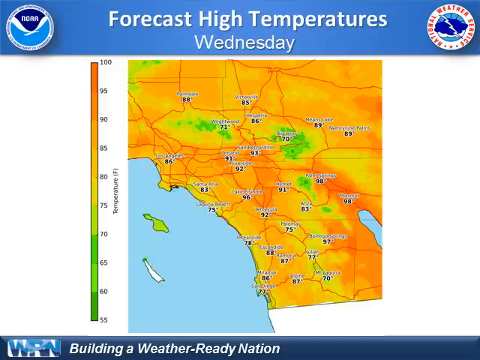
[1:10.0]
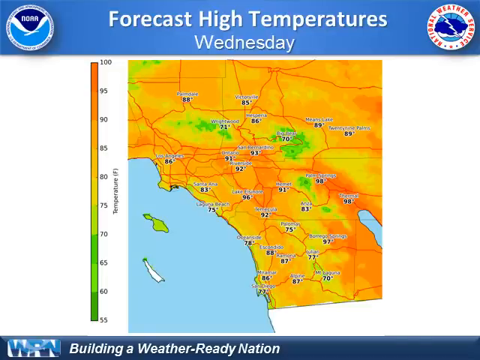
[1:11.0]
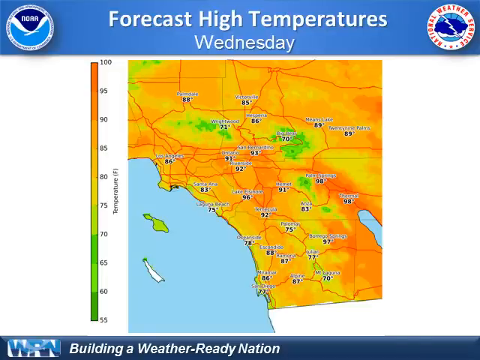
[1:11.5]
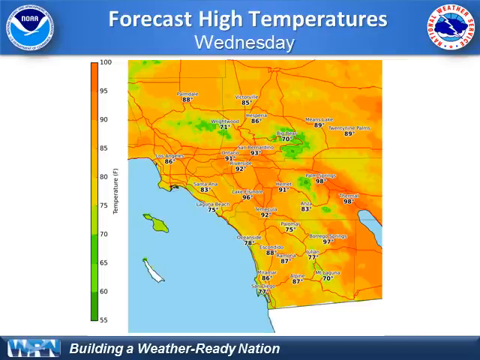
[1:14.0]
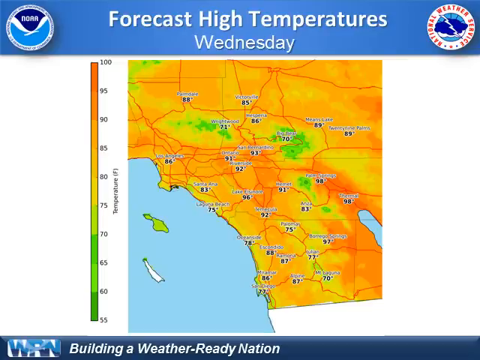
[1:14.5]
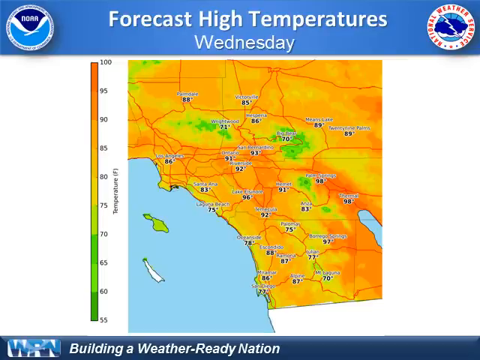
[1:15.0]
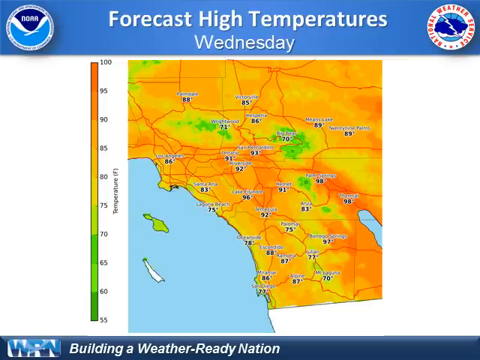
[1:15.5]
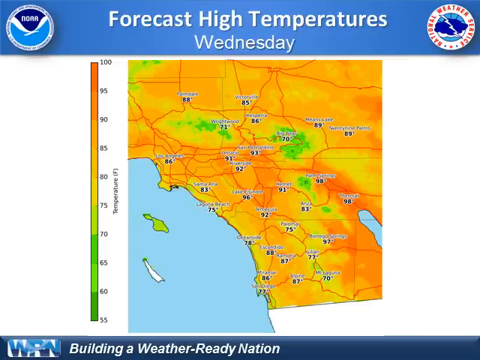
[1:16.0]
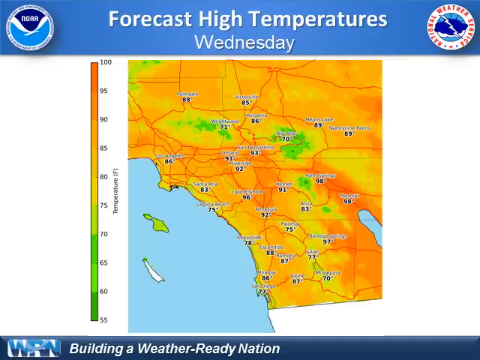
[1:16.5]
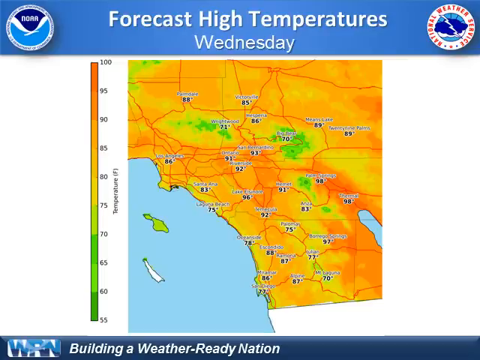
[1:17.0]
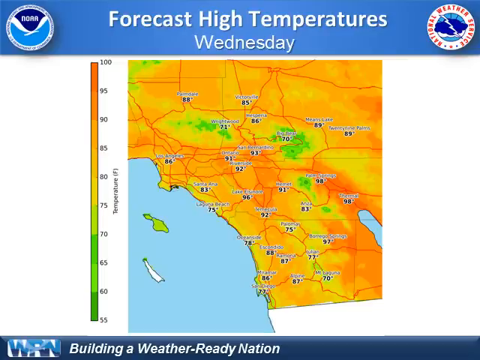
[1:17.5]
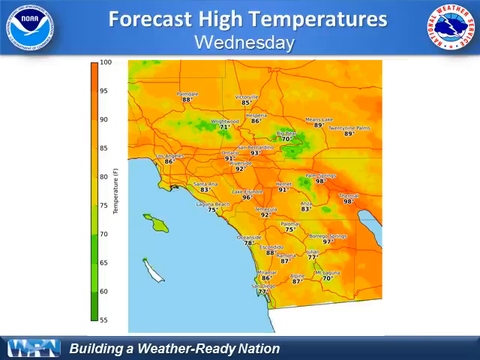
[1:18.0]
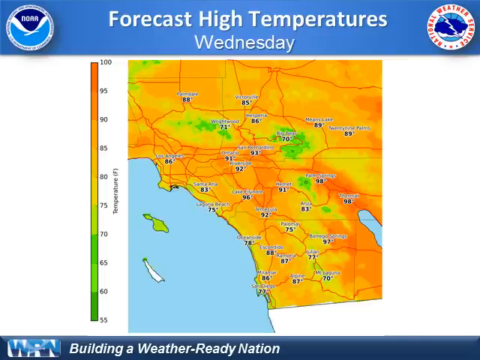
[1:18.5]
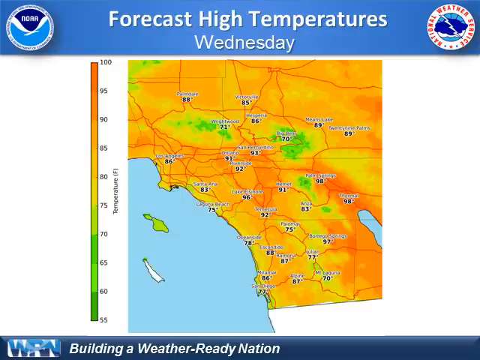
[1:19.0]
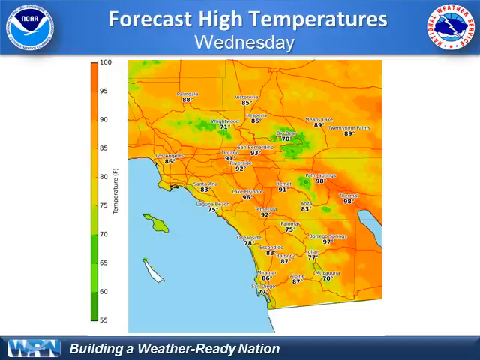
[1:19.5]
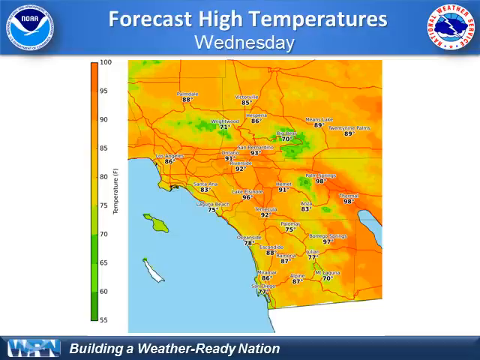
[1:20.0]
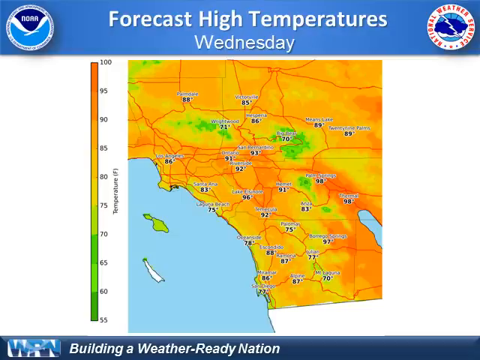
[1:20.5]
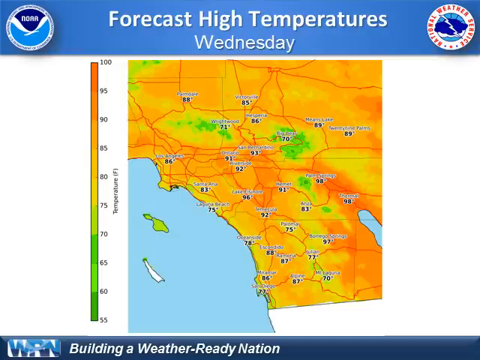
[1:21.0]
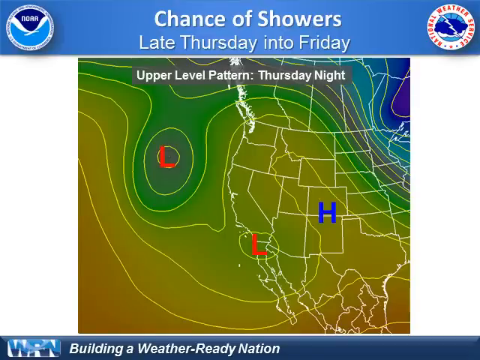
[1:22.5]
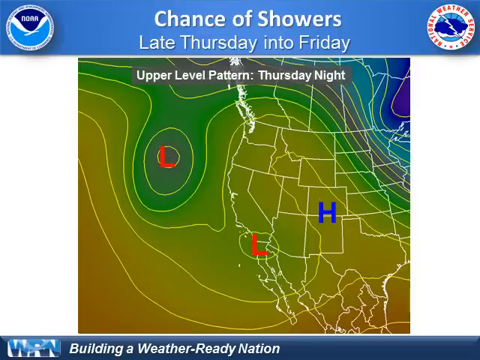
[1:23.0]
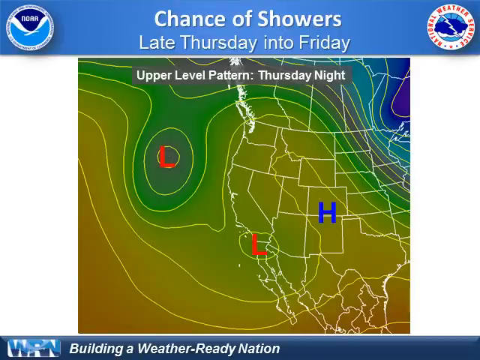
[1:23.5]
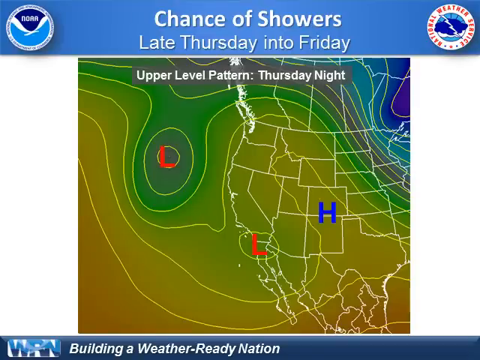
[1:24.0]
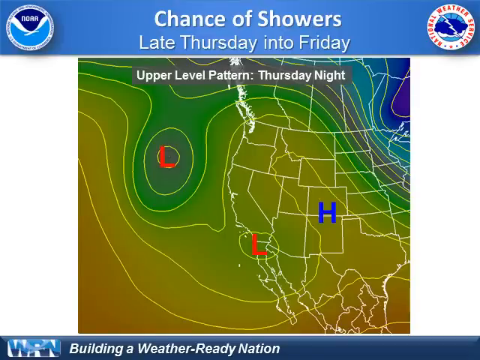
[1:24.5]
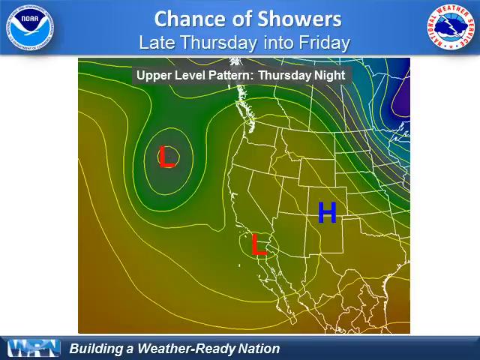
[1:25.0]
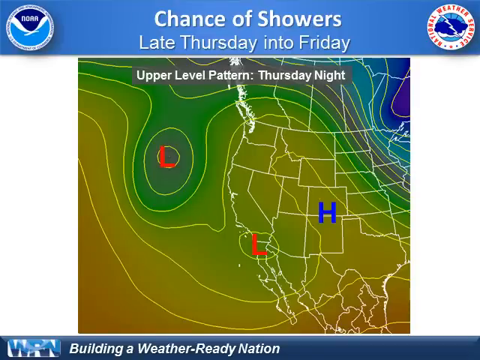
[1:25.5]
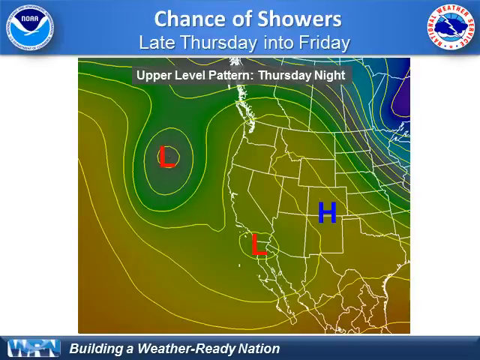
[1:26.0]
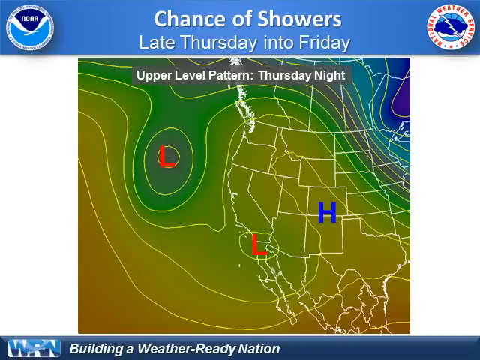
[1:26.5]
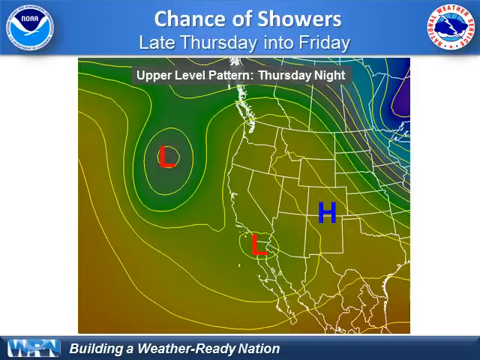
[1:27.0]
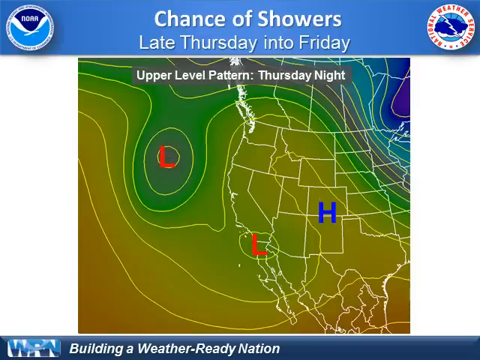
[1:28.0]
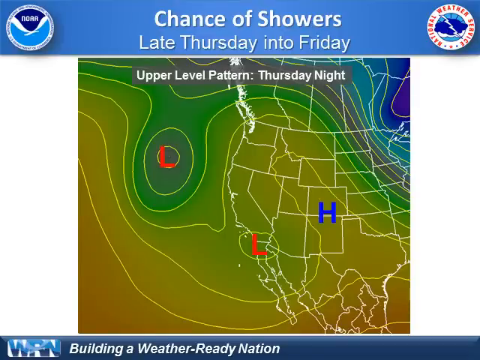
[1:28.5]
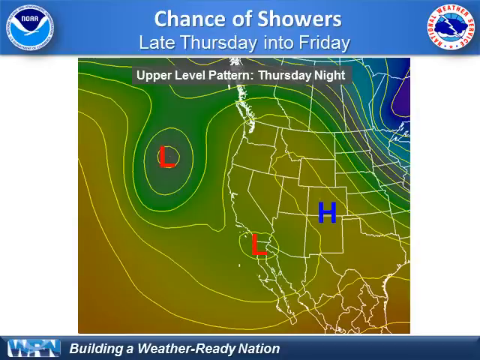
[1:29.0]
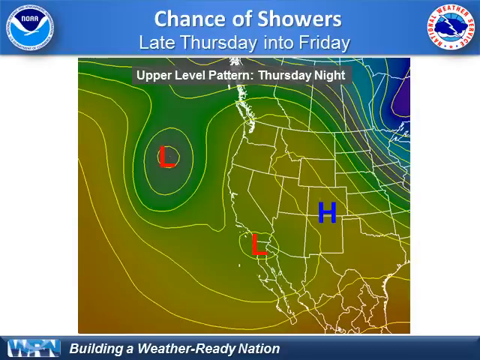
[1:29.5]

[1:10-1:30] A weather map says "forecast high temperatures on Wednesday" at the top. "National Weather Service" is on the right with a logo showing a cloud with some lightning, and NOAA and its logo are on the left. On the left side of the main part of the screen, a color scale runs from green areas at 55, 60, and 65 upward to 100, which is closer to dark orange. Cities on the map show temperatures: Santa Ana 83, Laguna Beach 75, Oceanside 78, Escondido 88, Ontario 91, San Bernardino 93, Los Angeles 86, Palmdale 88, Victorville 85, and 29 Palms 89. Next, a map shows a low pressure out to sea, also hitting Baja California, and a high pressure moving across the United States. It says "chances of showers late Thursday into Friday".